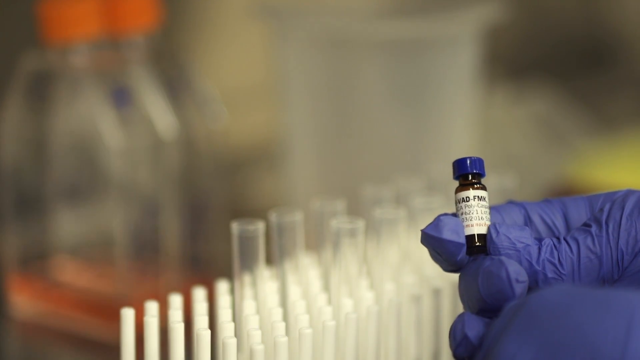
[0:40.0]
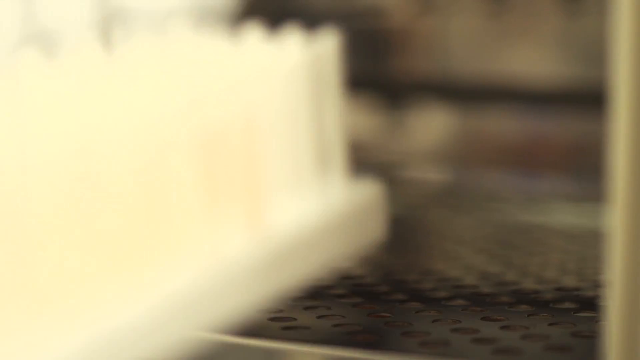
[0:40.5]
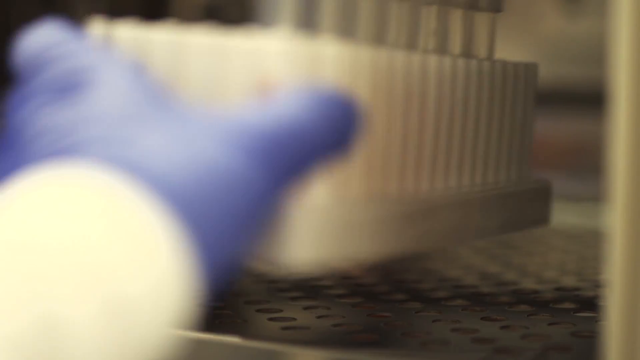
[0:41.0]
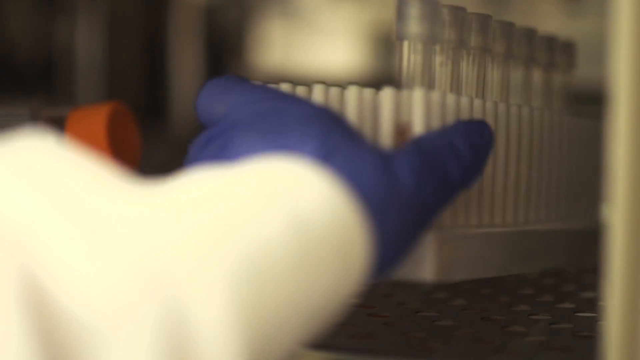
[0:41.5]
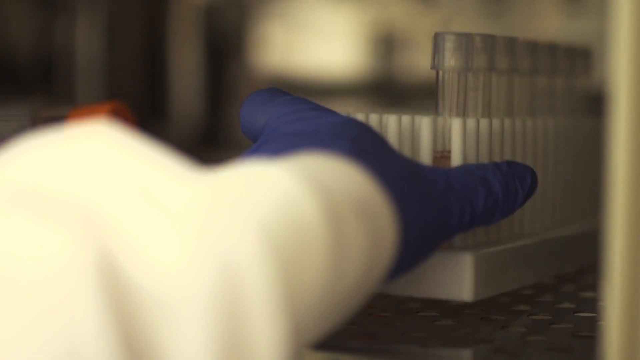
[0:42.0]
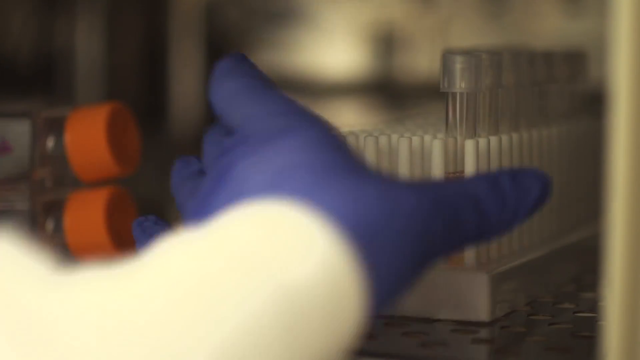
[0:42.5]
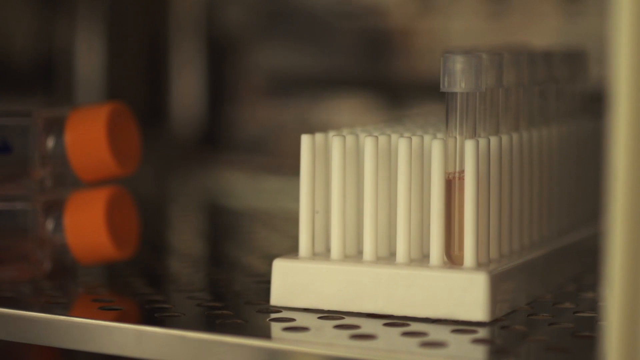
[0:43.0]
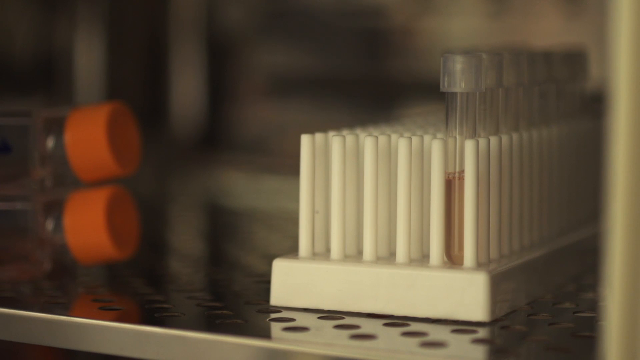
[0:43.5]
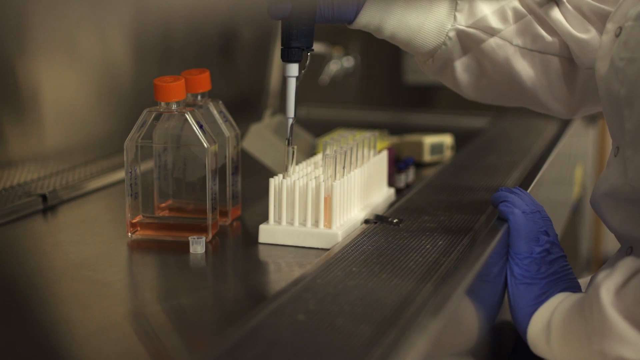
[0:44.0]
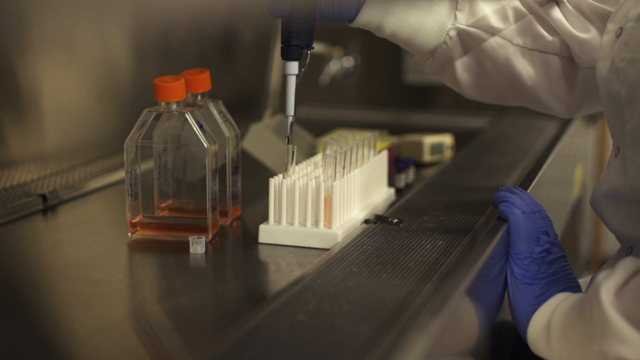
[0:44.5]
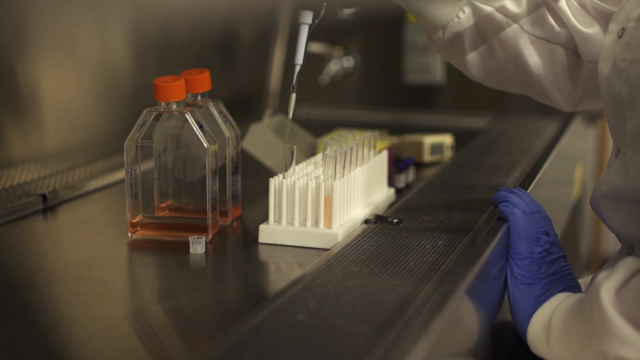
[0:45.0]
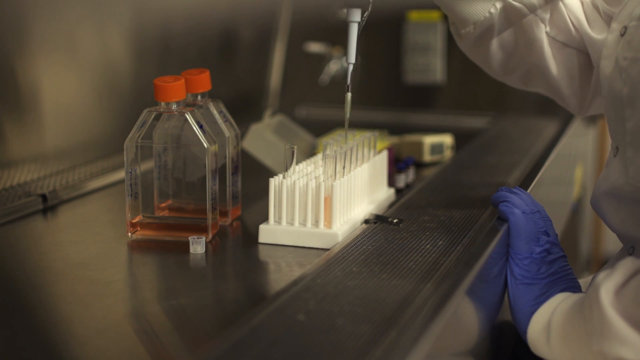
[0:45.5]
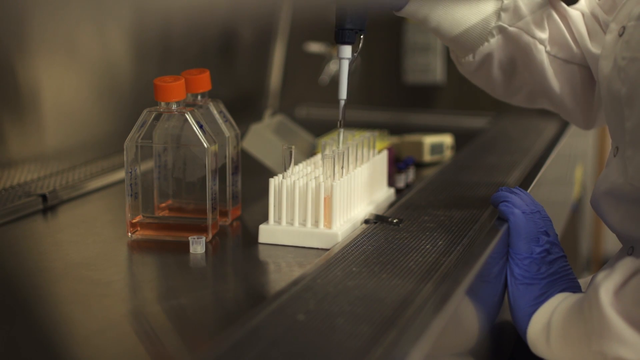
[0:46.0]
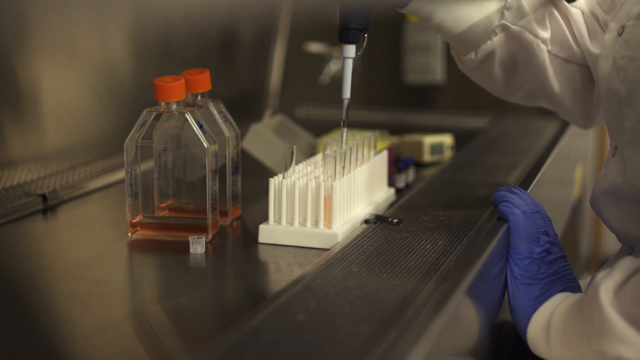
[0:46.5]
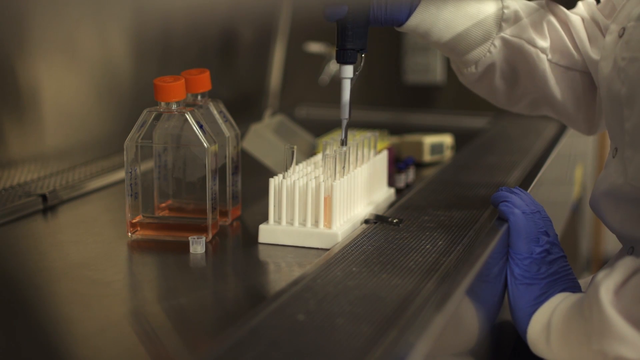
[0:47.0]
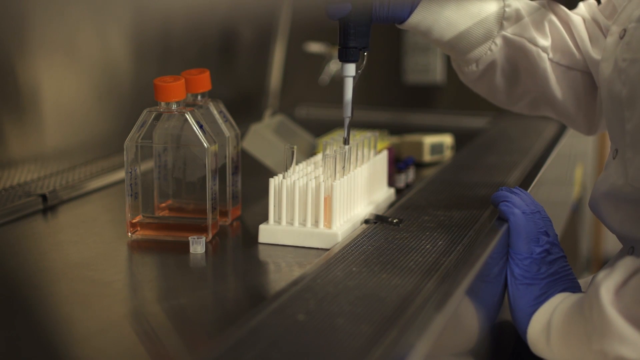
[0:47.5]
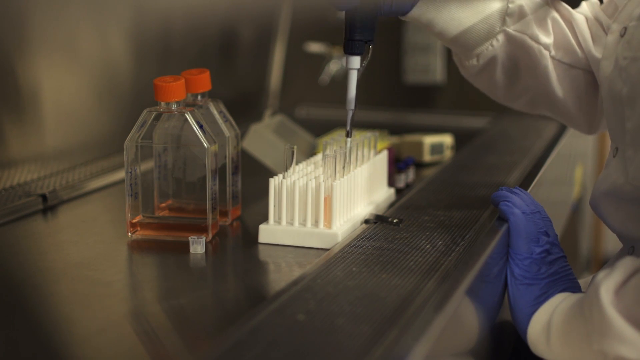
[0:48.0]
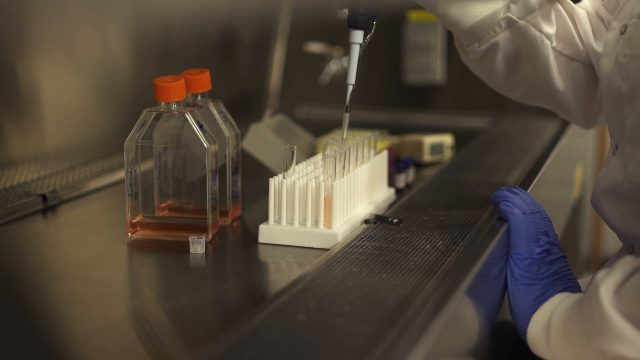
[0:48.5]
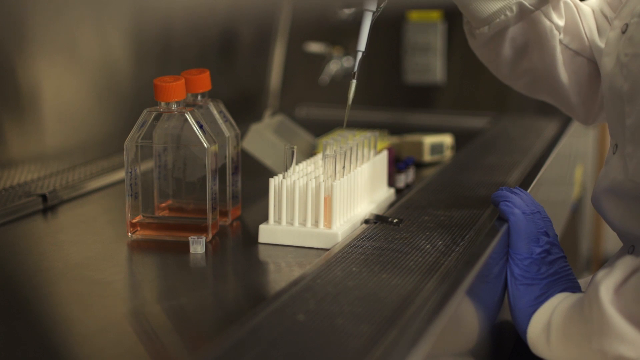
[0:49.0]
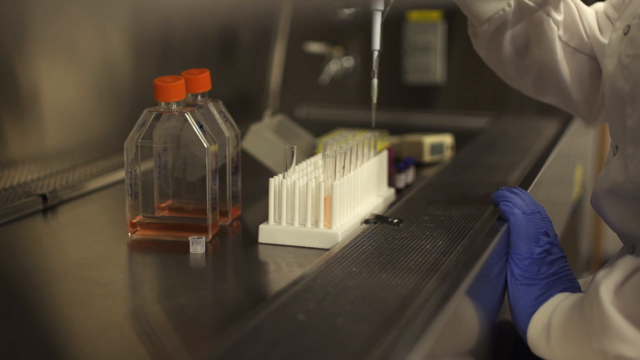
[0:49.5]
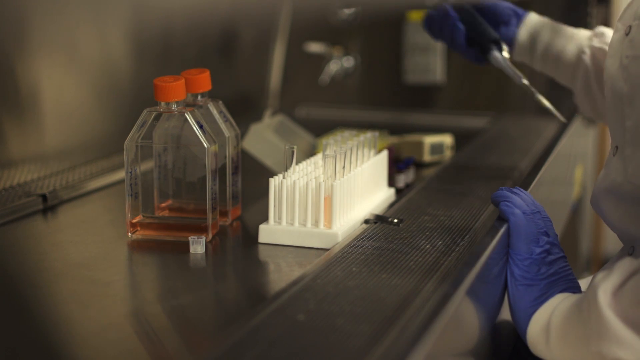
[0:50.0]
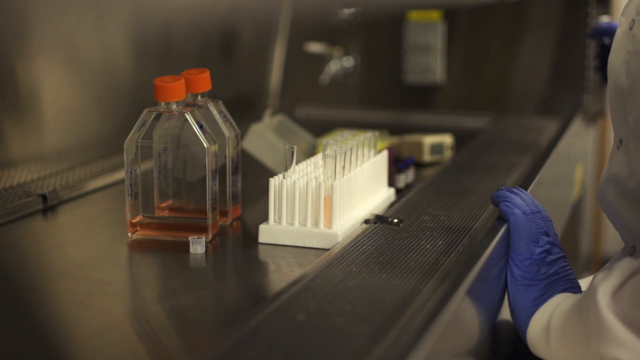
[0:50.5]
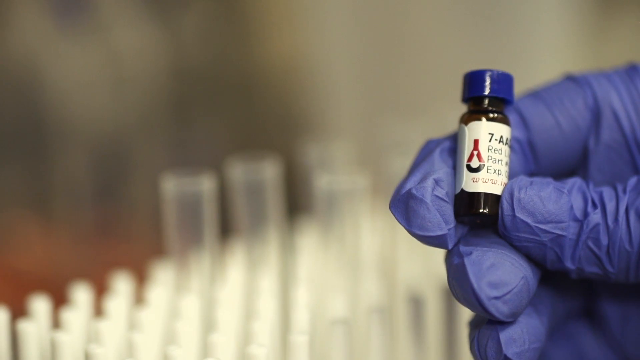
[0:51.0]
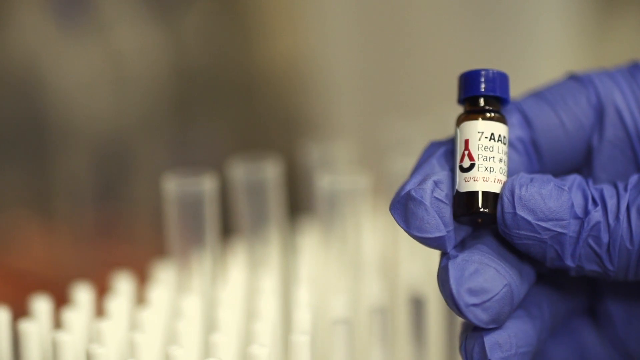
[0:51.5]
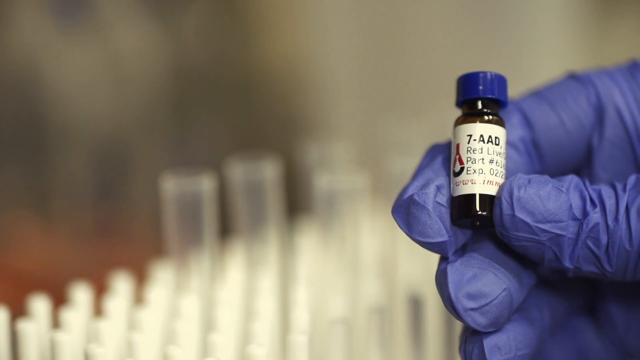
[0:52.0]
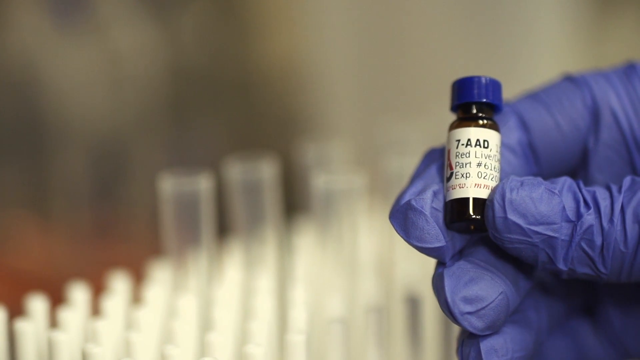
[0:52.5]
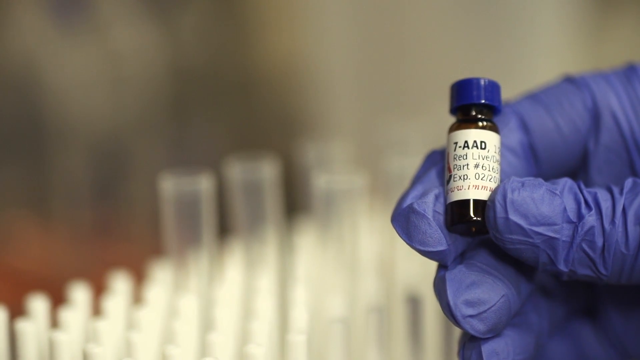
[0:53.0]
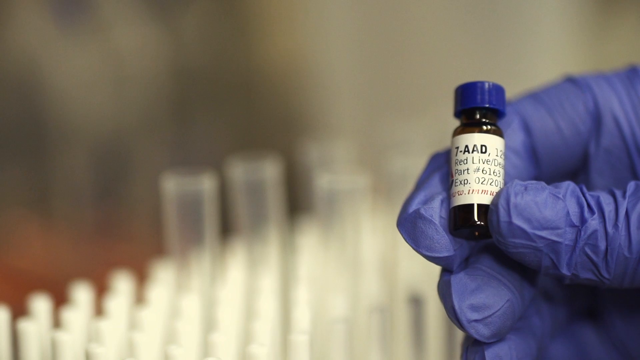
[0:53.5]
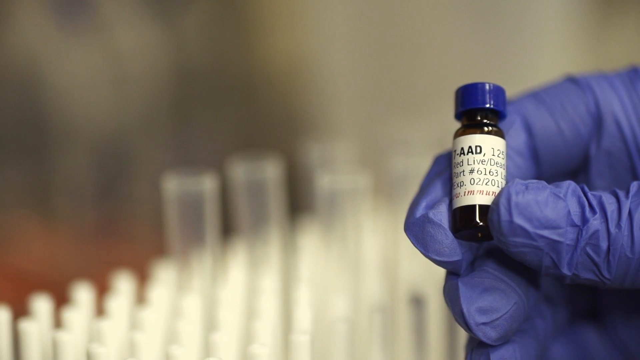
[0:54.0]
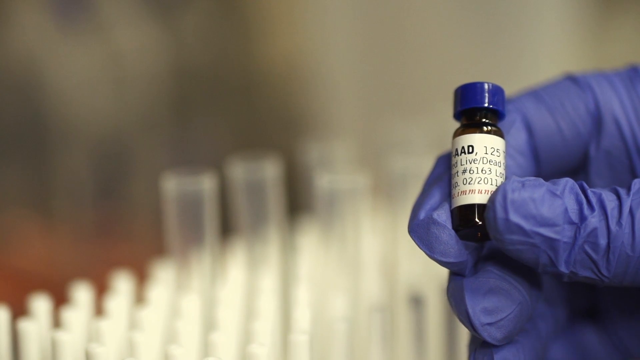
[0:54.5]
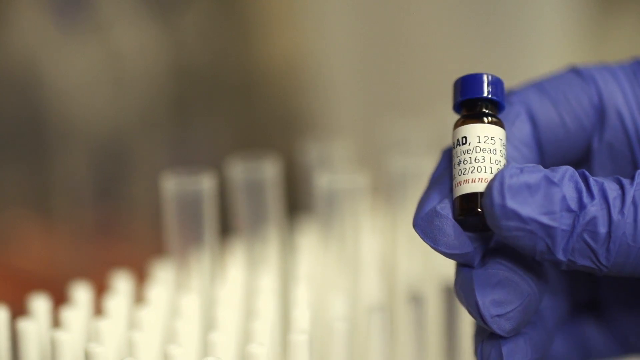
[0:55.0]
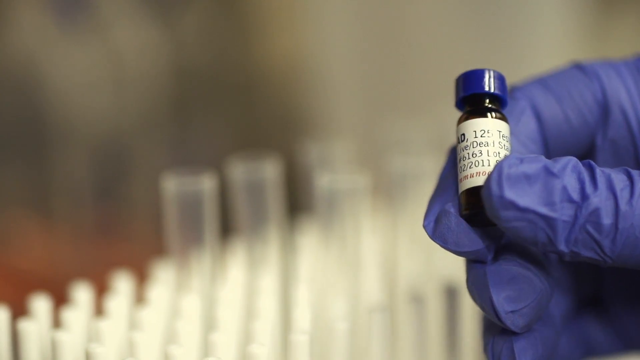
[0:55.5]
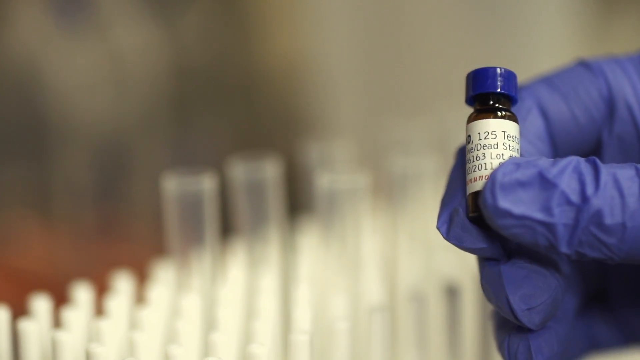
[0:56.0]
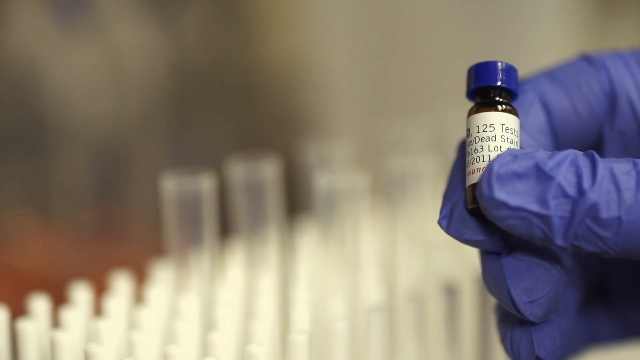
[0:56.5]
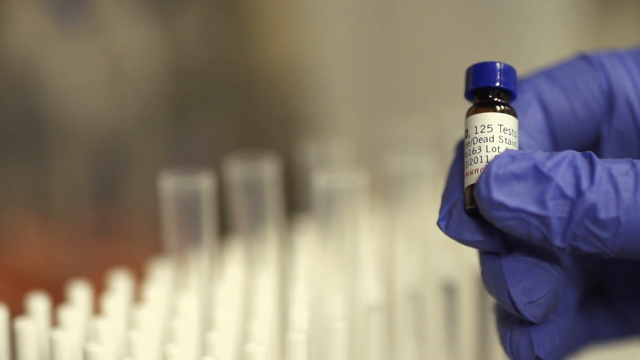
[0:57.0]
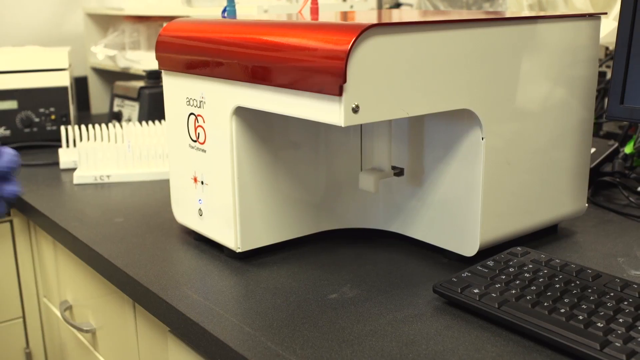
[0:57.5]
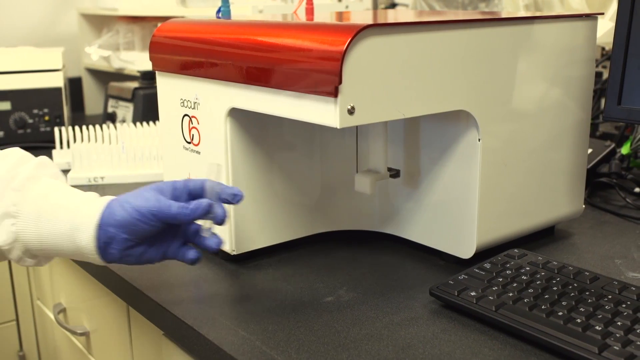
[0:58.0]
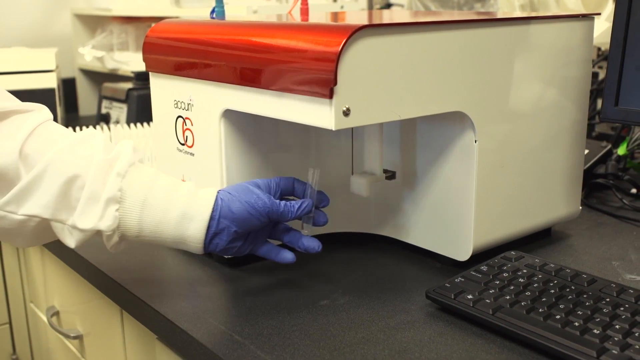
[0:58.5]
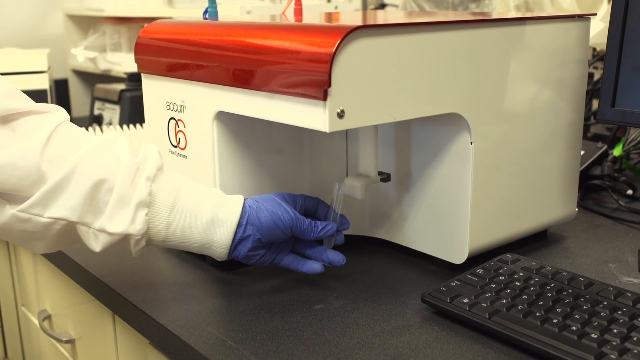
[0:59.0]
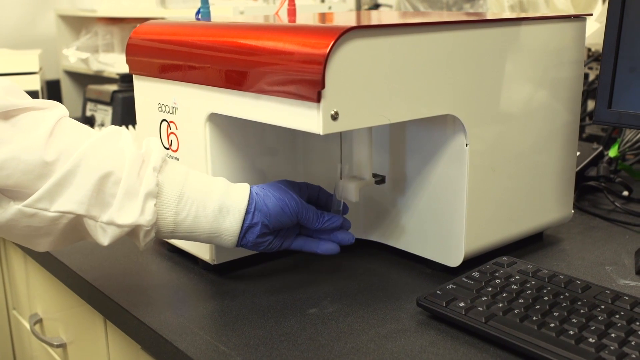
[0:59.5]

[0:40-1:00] The product is on screen: a small dark brown vial with a white sticker with black text, and a blue screw top. In the next scene, a person working in a lab, wearing a blue latex glove, places a stack of vials into some kind of machinery. The next scene shows them using a little plunger to pull liquid out of vials and place it into a small dark brown vial with a blue screw cap. The sticker on the vial has black numbers and letters, one reading "7-8AD", apparently an identification for the product inside.